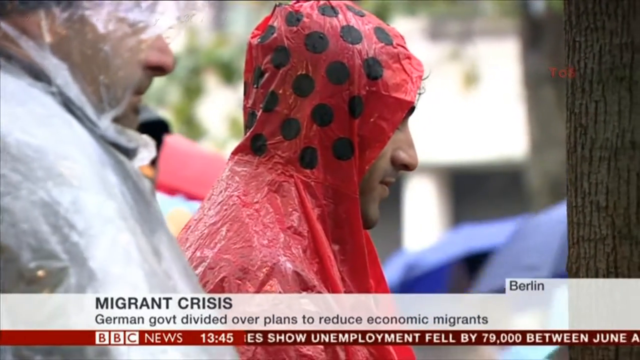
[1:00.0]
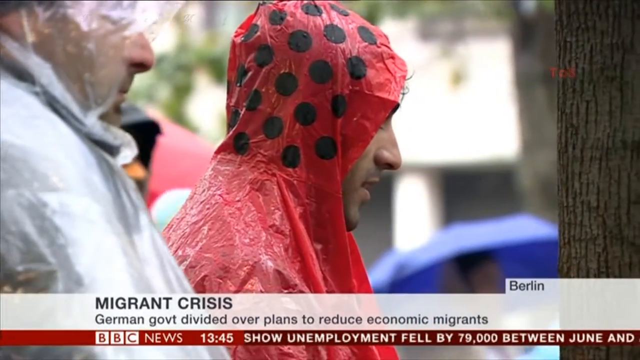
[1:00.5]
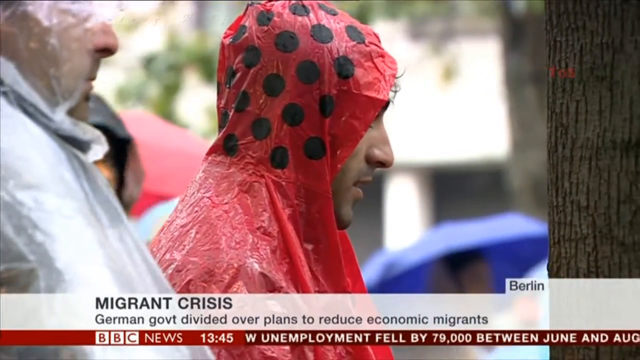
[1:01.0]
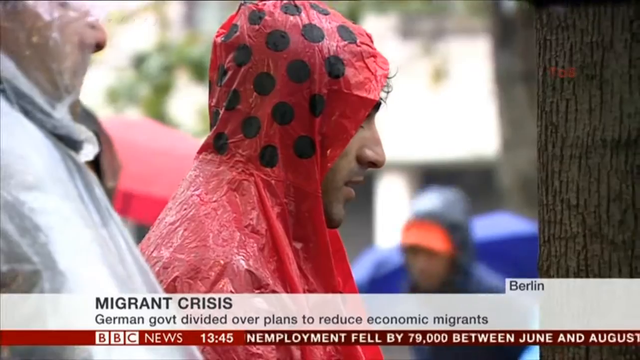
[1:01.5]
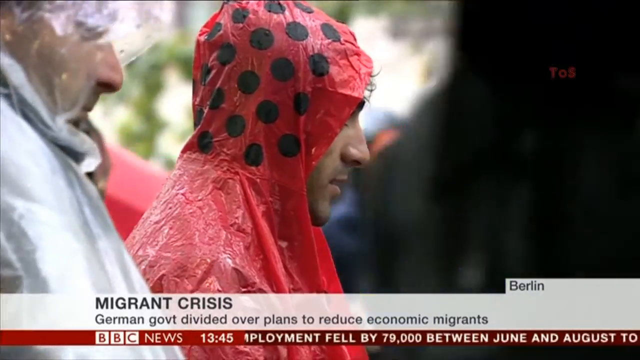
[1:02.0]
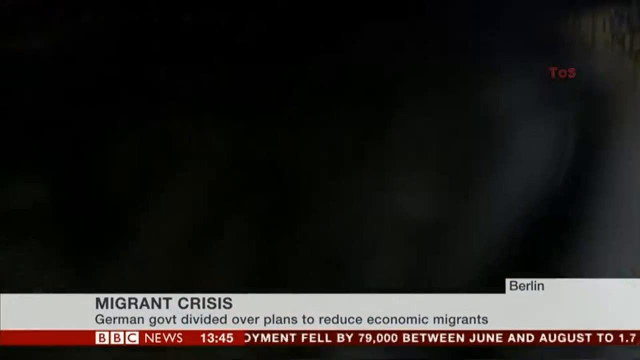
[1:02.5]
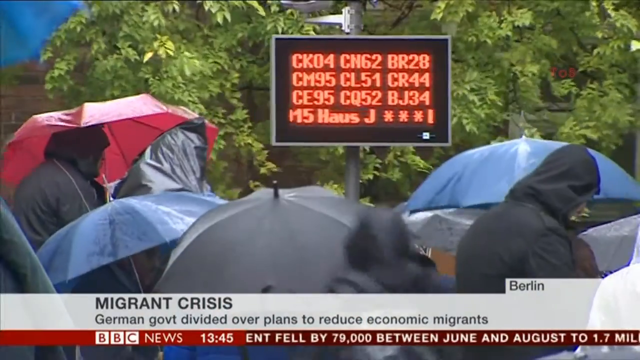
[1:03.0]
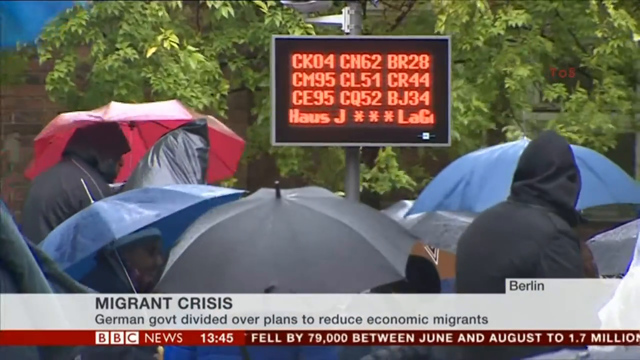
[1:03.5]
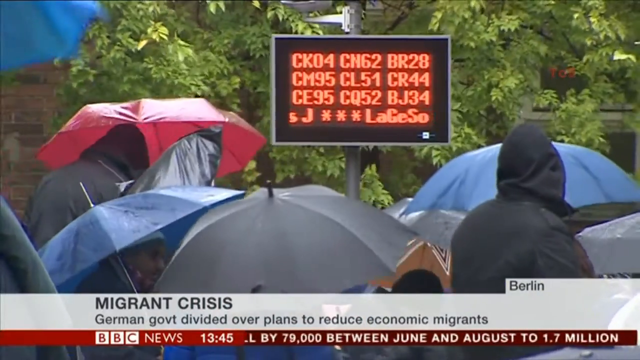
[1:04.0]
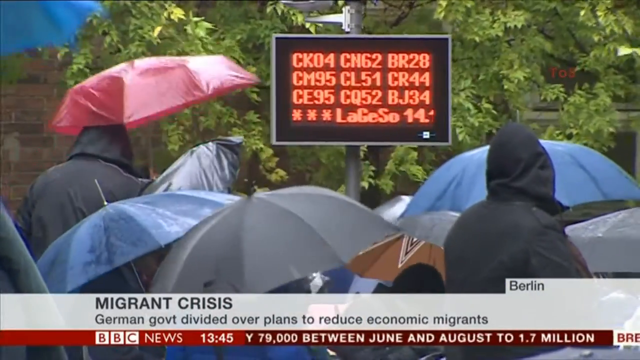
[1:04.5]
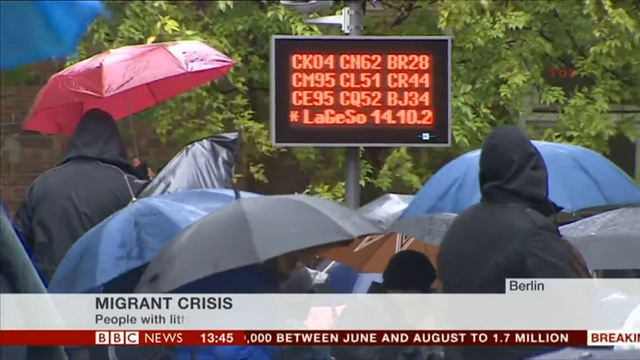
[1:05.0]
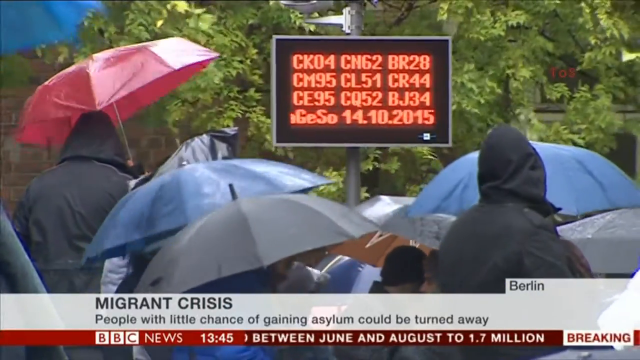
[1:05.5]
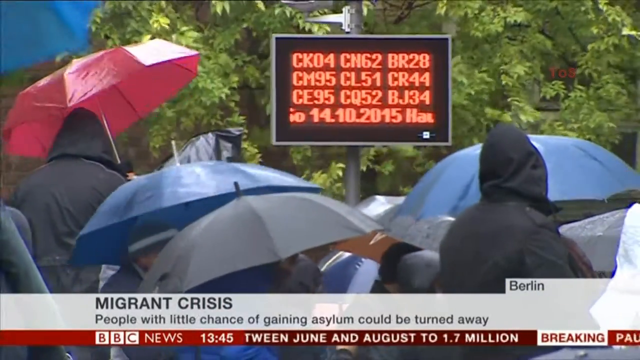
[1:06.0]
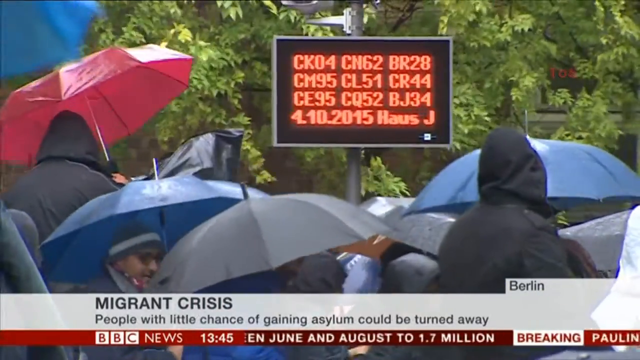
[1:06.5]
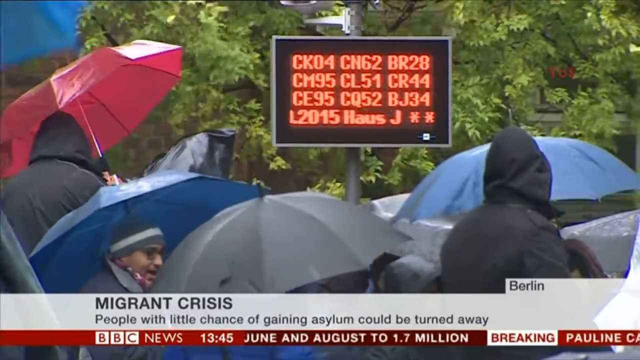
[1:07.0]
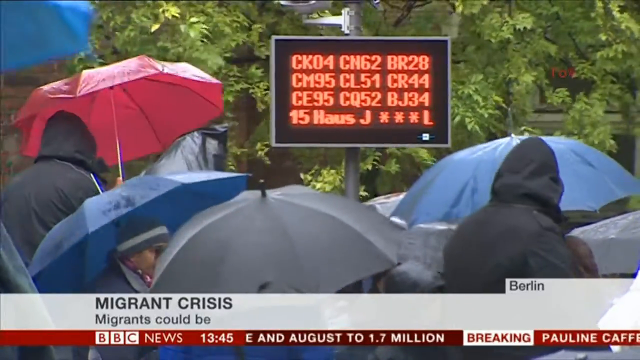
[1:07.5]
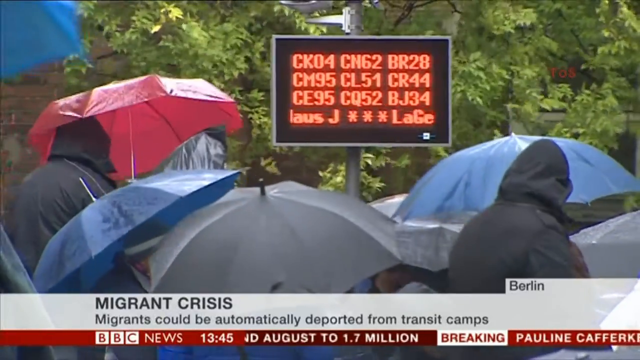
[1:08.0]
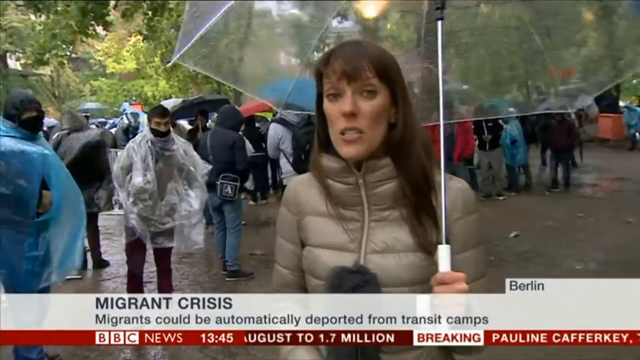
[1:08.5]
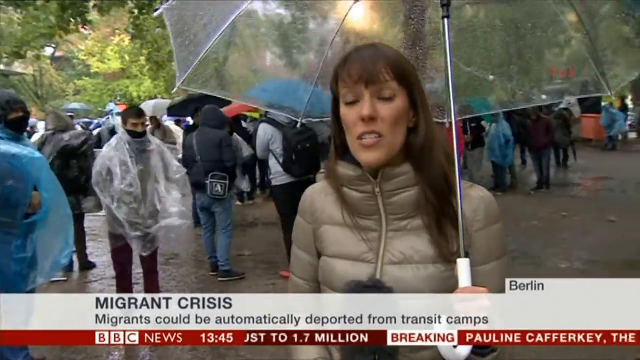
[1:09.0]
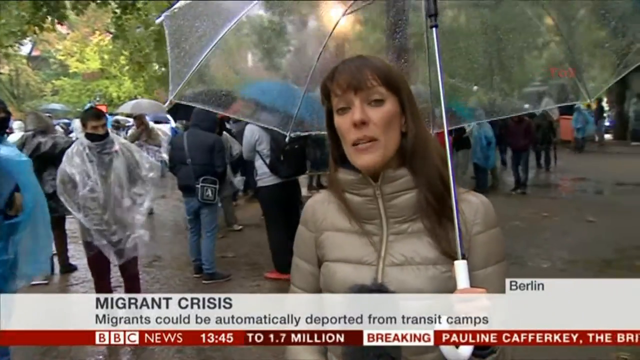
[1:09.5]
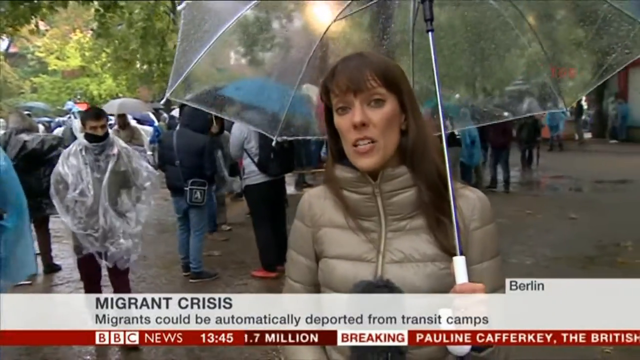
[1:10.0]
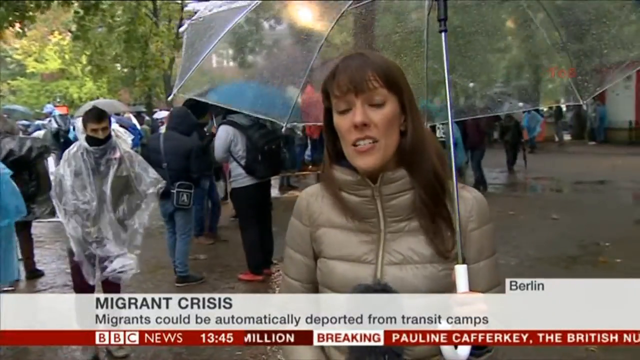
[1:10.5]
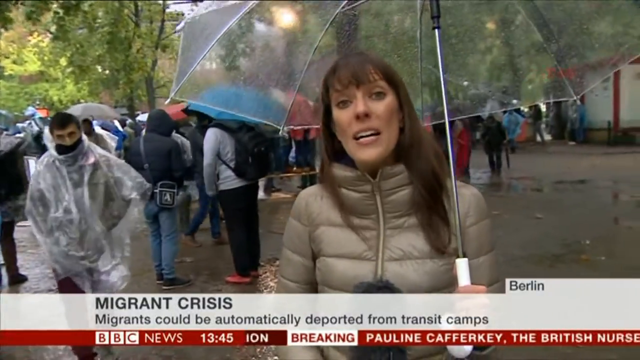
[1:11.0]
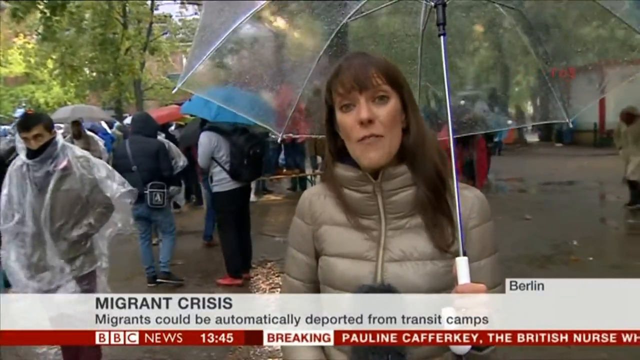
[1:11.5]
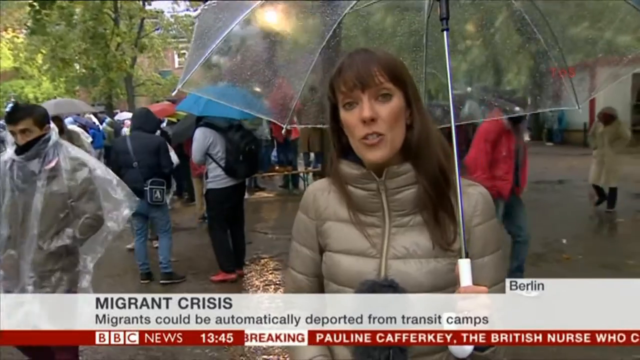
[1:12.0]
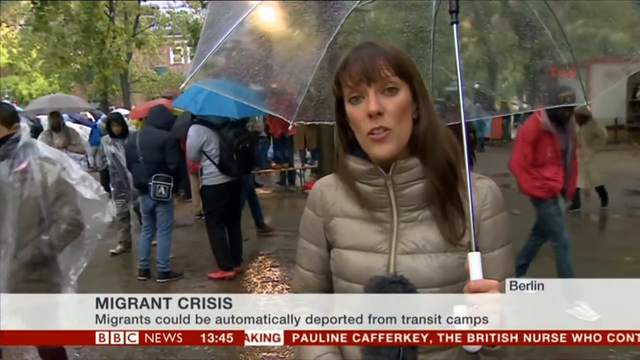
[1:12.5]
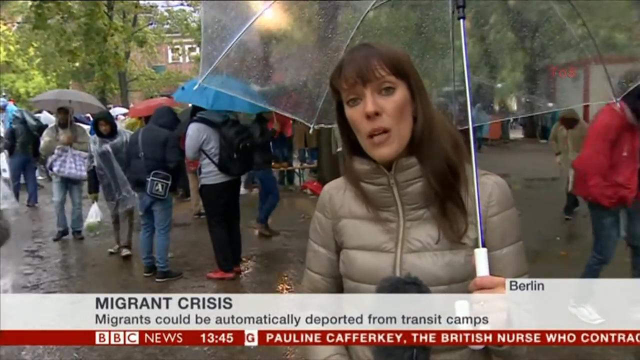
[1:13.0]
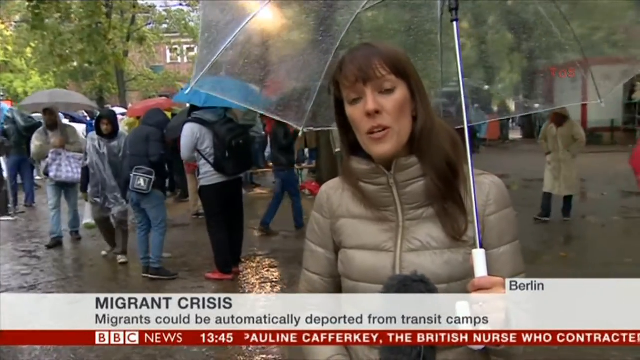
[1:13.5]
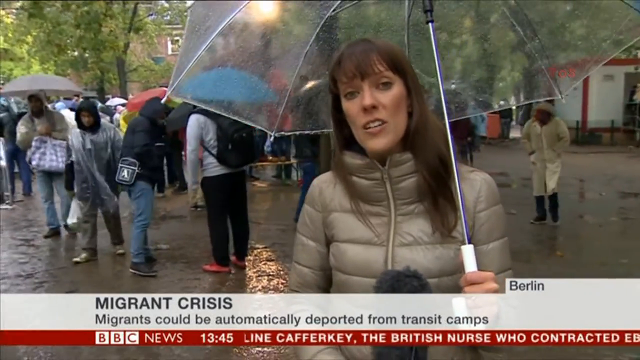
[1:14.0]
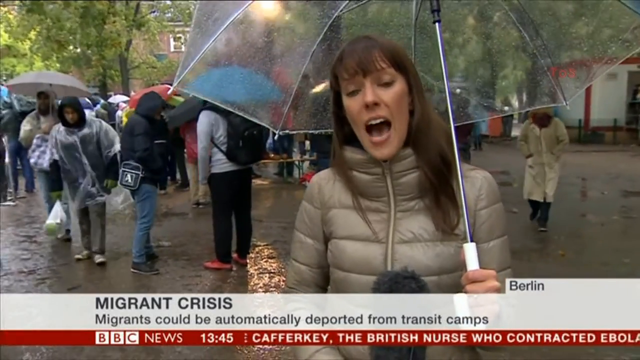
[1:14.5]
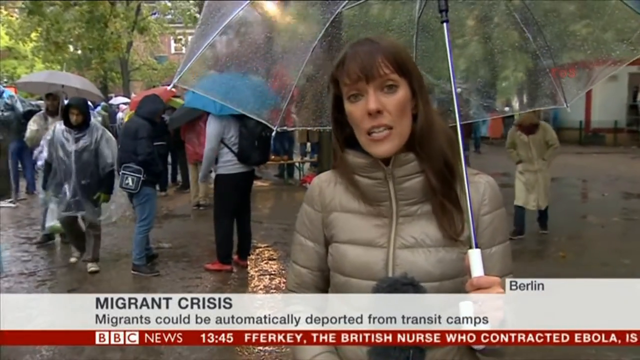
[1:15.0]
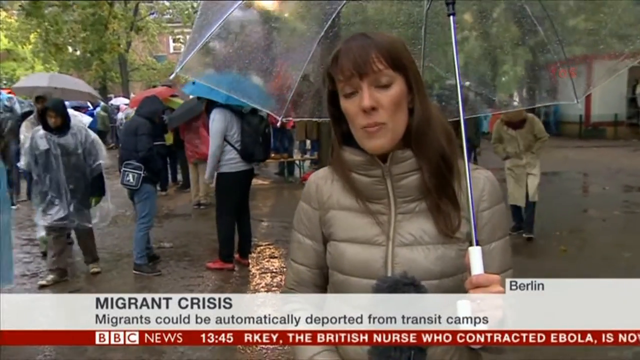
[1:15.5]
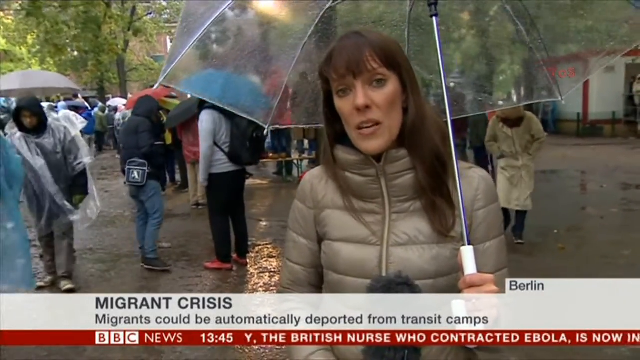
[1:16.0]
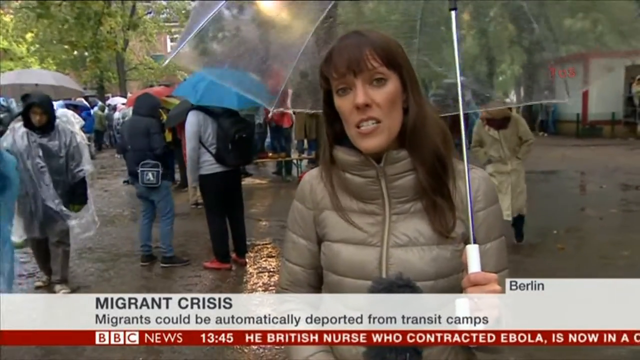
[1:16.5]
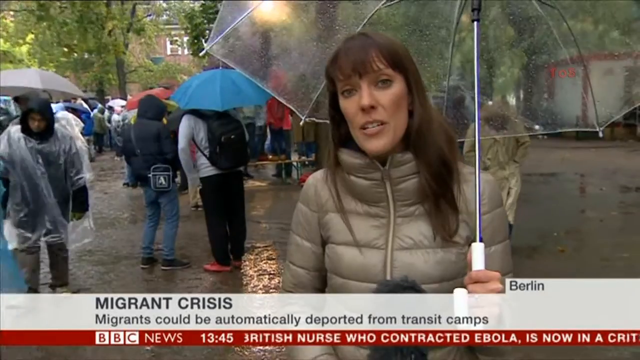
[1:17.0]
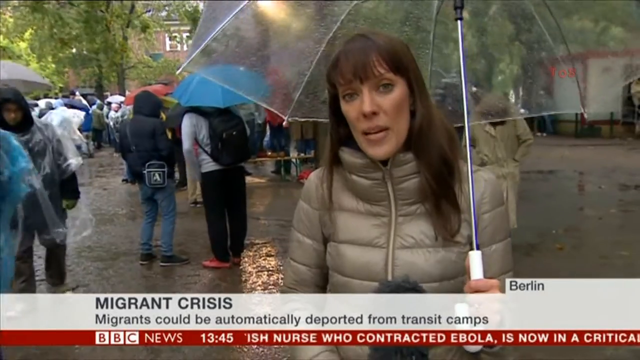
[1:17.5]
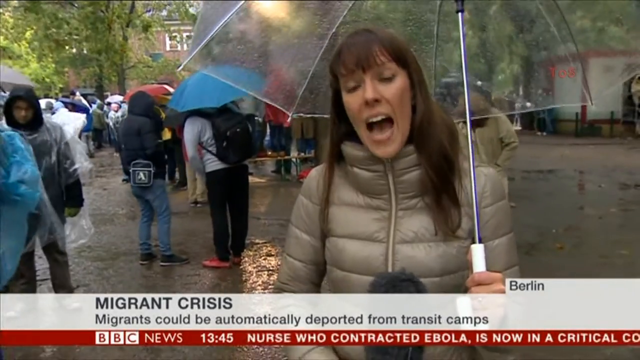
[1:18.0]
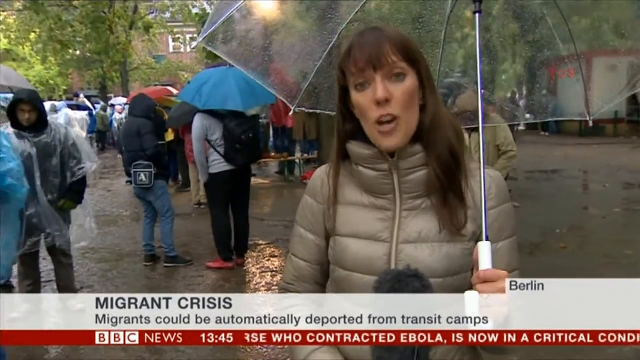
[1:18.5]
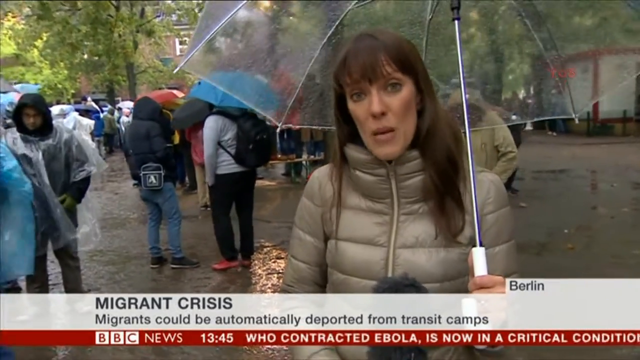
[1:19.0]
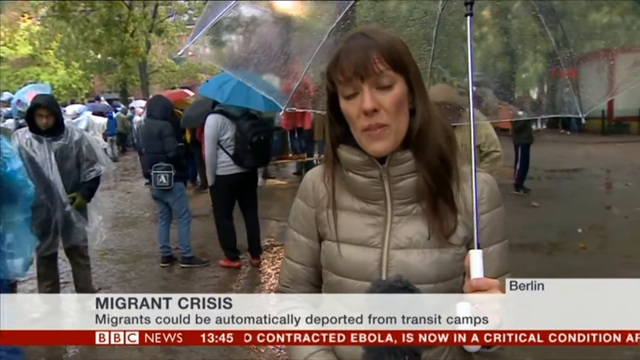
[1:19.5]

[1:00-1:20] The title "Migrant crisis" appears down below, with text reading "German government divided over plans to reduce economic migrants". The two individuals stand on screen, both wearing raincoats. Someone walks in front of the camera, and the shot pans to another area, still outside and apparently the same place. Many umbrellas are up, and there is a sign with numbers and letters on it and data moving across its bottom; what it is about is hard to tell. The camera pans back to the woman, apparently the reporter, who holds the microphone and an umbrella that seems to be clear, almost see-through but slightly hazy. She speaks to the camera as other people walk around her. It is raining, and the wind picks up a little, blowing the trees slightly. In the background is a building that looks white with red trim, with some gates in front of it.